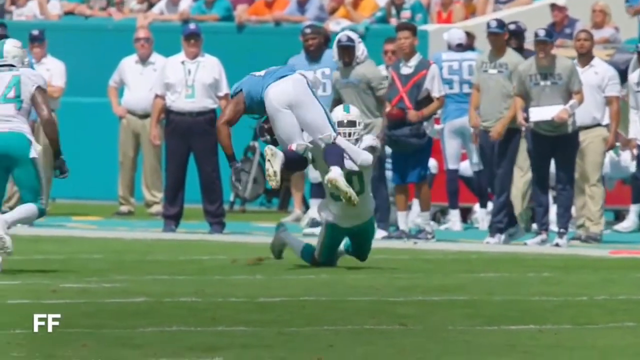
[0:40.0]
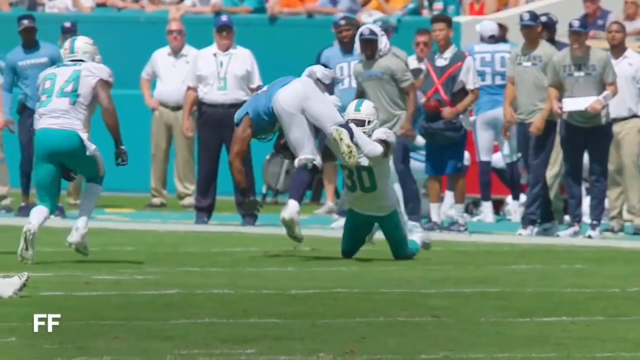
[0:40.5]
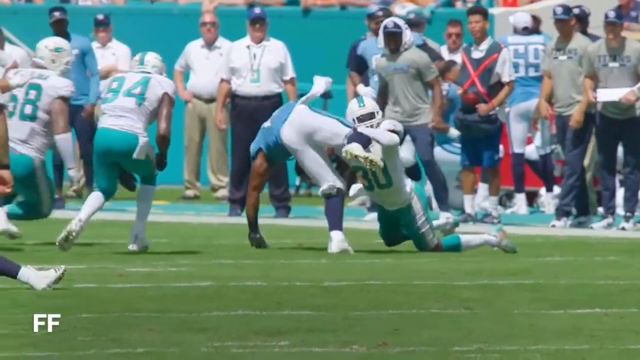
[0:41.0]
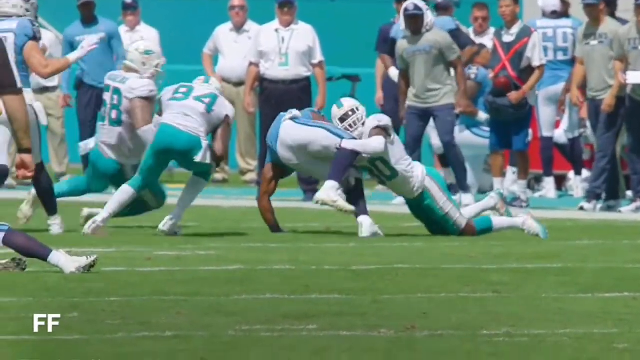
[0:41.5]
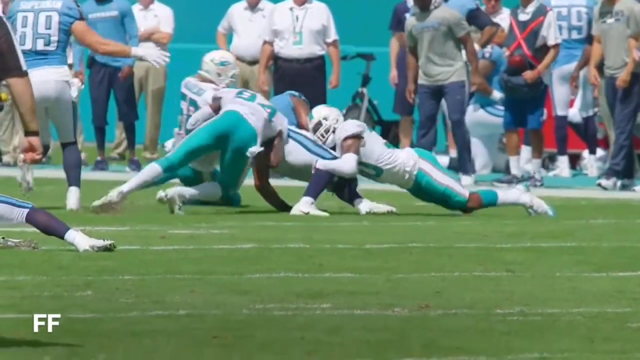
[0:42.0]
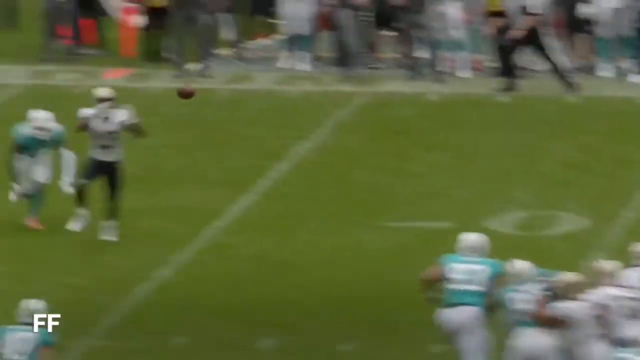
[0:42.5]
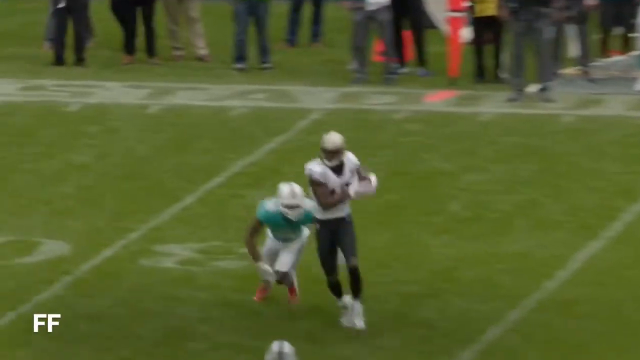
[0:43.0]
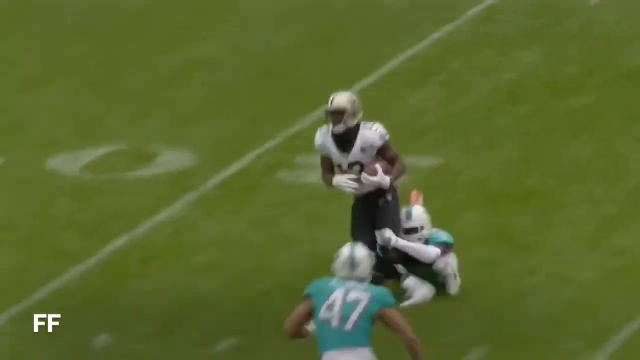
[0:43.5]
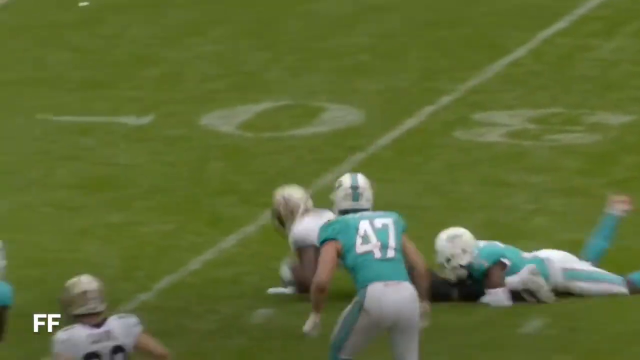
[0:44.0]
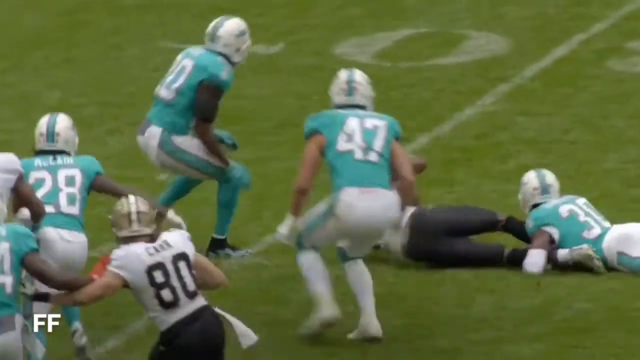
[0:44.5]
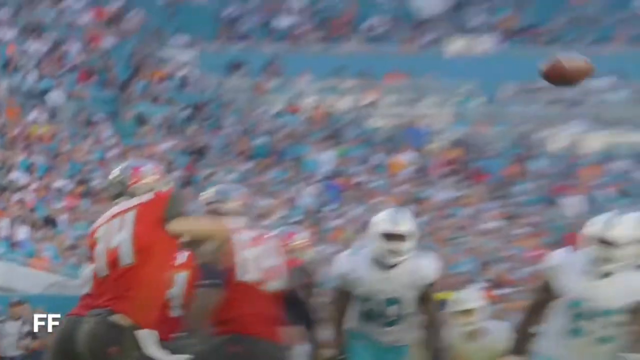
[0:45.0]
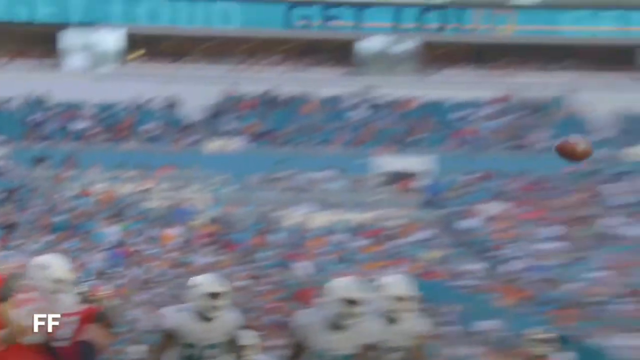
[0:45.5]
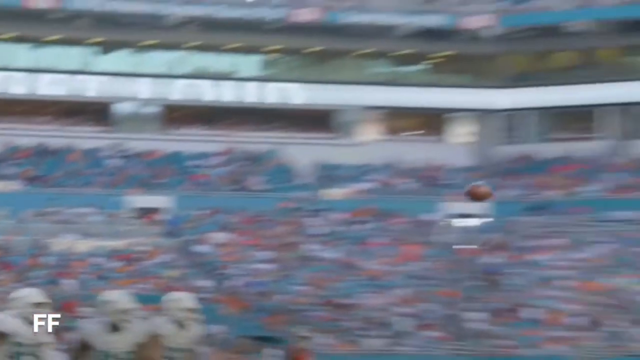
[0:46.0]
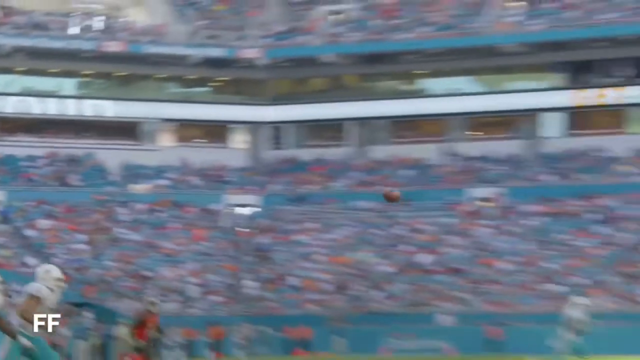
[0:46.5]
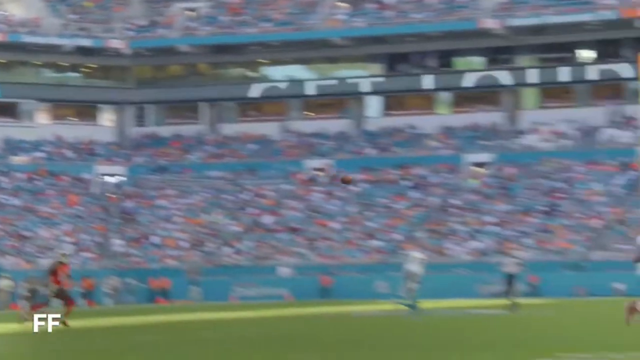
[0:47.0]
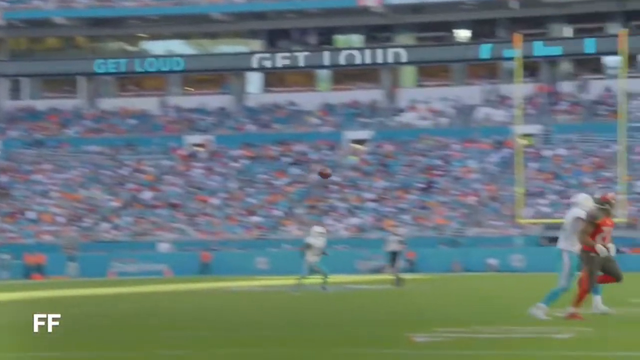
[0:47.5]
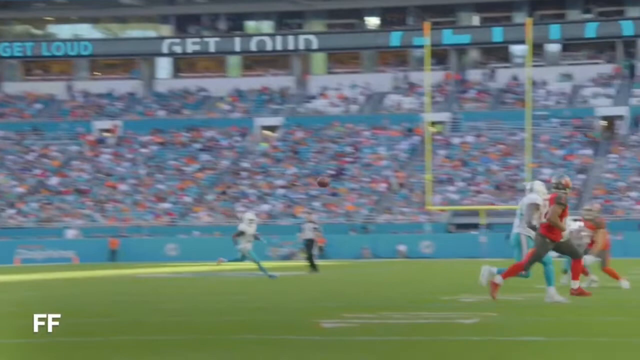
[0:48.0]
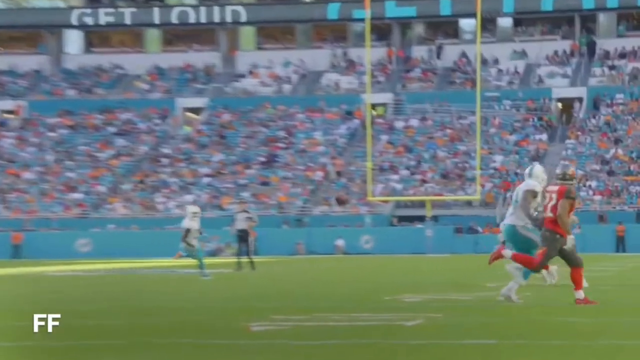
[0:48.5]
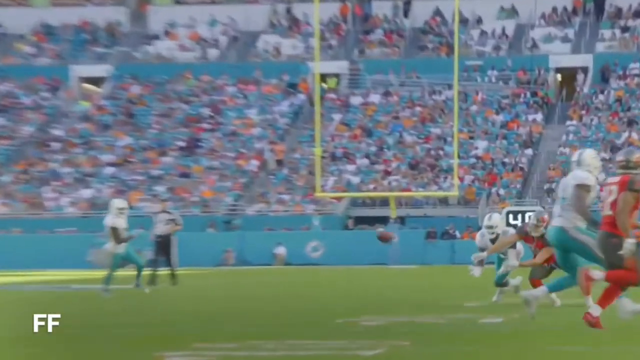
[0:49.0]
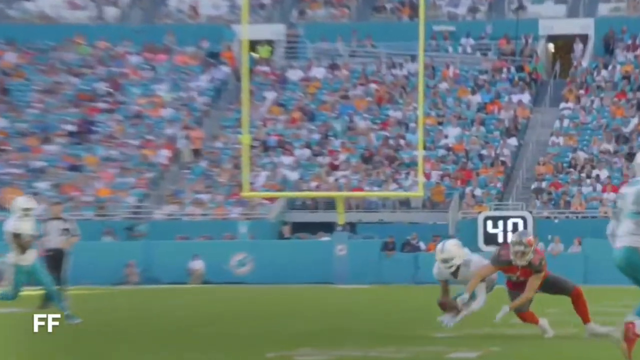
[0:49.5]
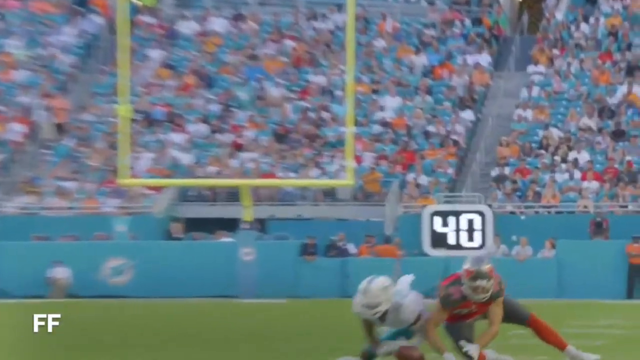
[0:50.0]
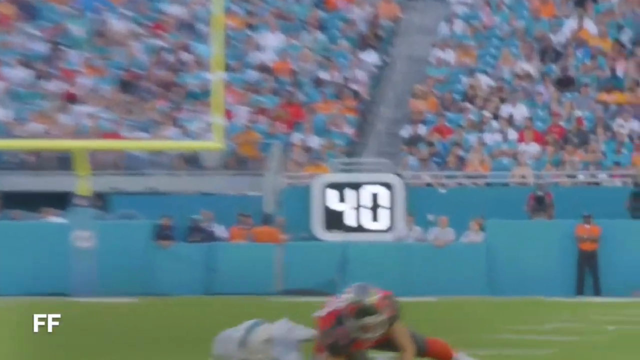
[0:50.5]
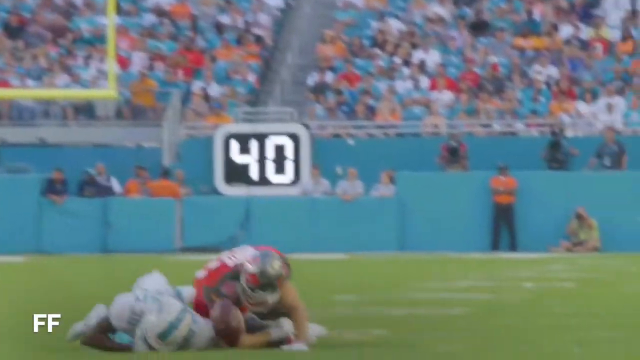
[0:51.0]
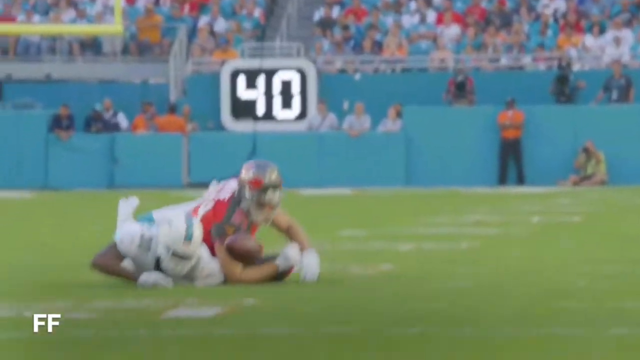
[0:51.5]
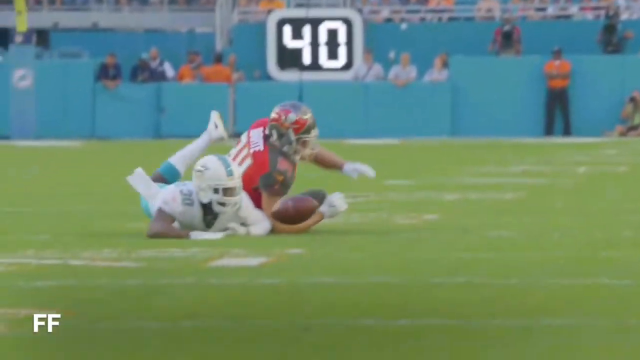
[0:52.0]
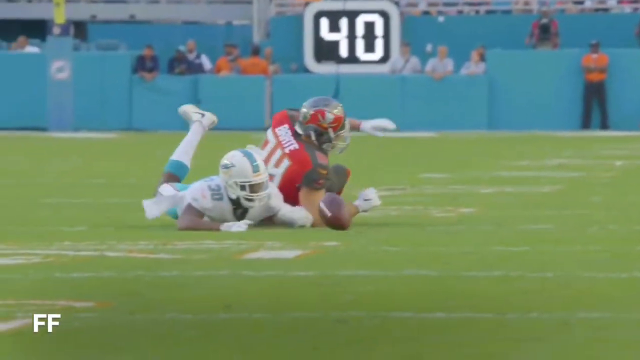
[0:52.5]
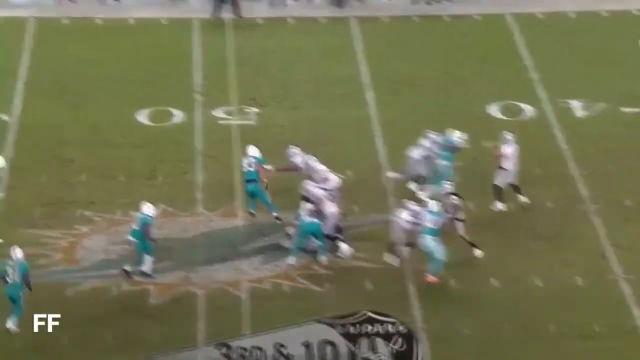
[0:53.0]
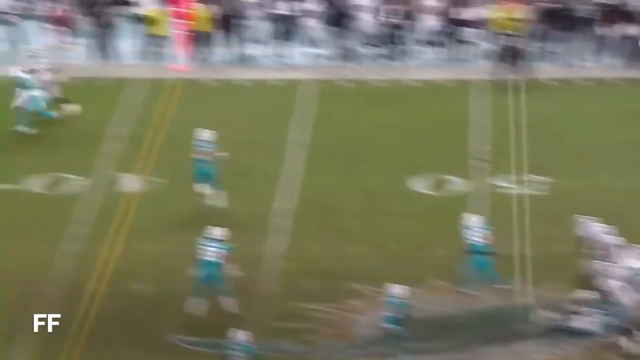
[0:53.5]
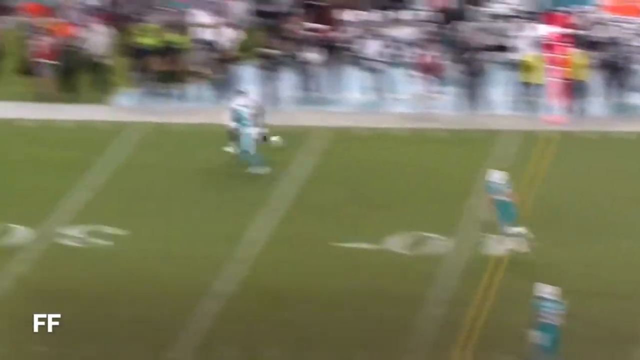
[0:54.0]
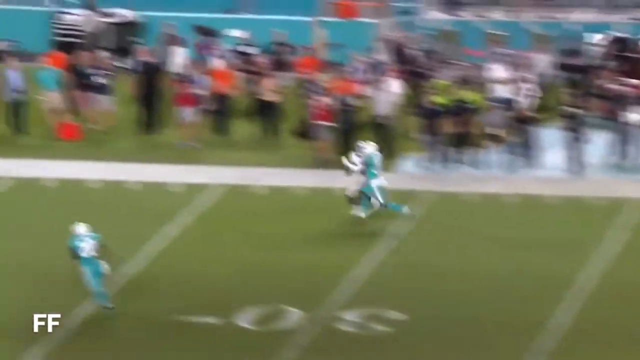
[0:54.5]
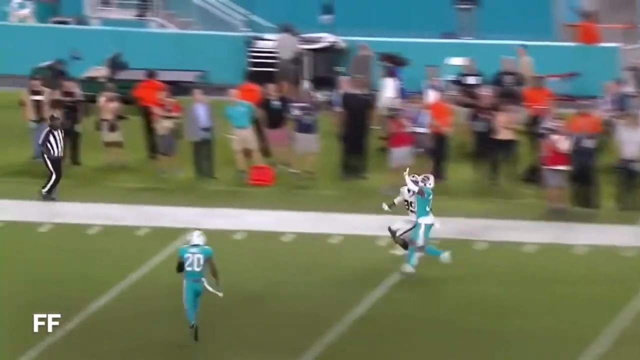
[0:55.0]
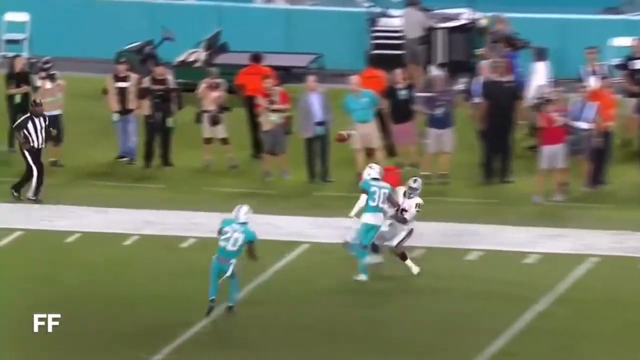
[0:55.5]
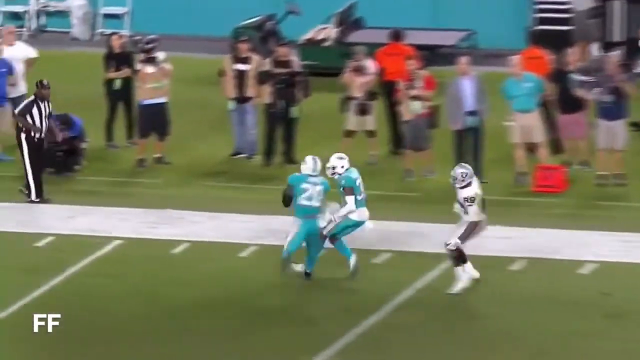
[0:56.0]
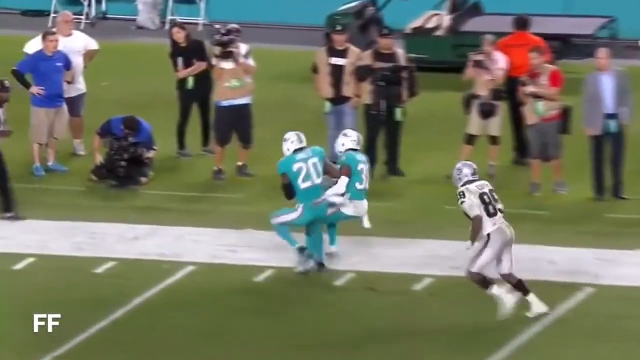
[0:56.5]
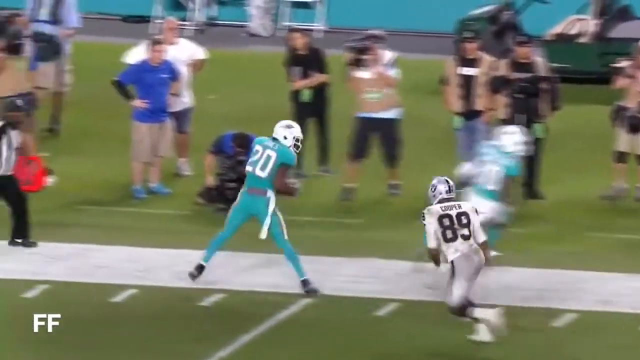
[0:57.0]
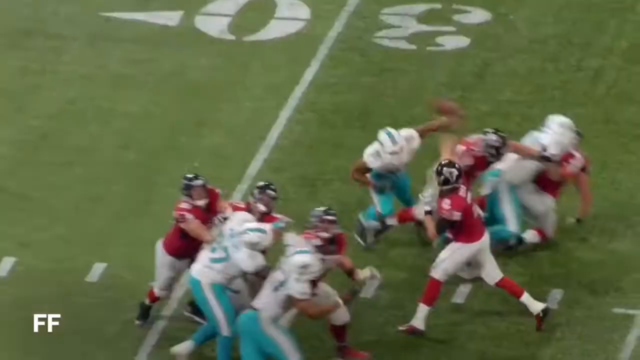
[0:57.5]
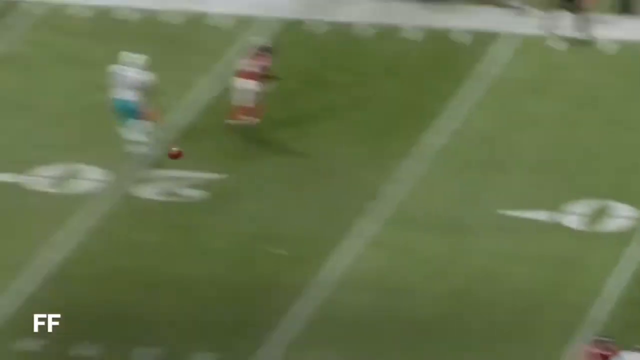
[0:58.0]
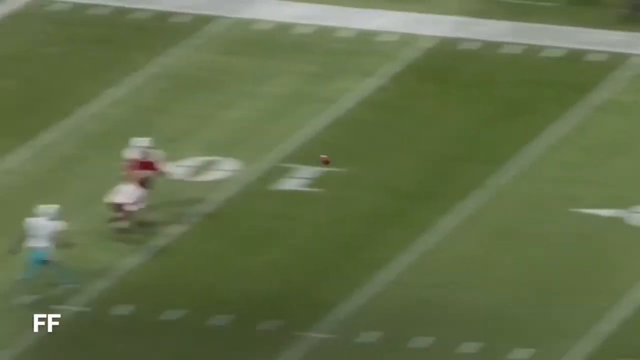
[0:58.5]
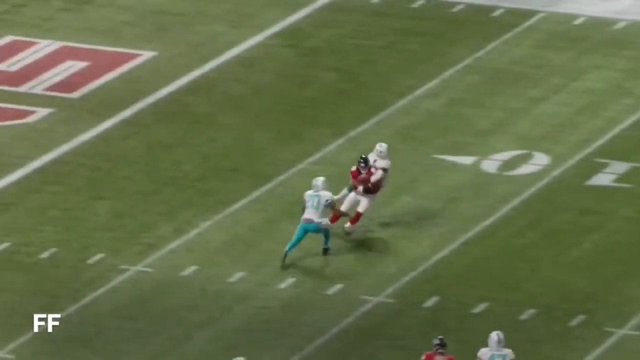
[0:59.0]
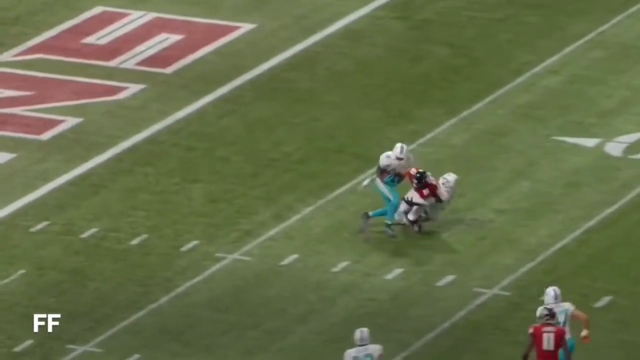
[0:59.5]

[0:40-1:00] A player in midair is wrestled by three players. The ball goes through the air and is dropped by a player in red. The next shot shows possibly an interception, or at least someone stopping a catch from a quarterback's throw. The stadium is pretty packed, with a few empty seats. The footage seems to go from game to game showing highlights, featuring number 13, number 34, and maybe number 20, and it seems to focus on different players in different matches, possibly in college football.